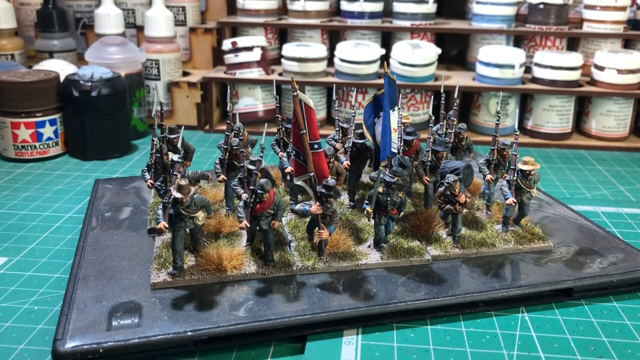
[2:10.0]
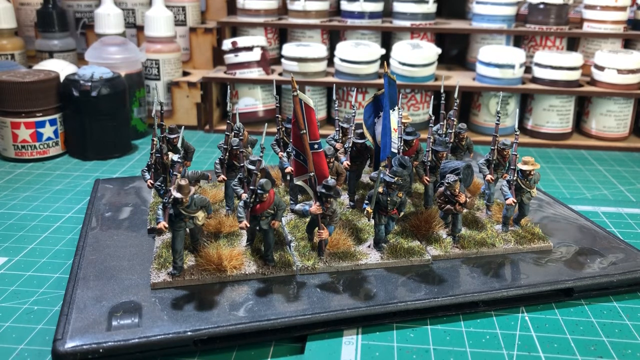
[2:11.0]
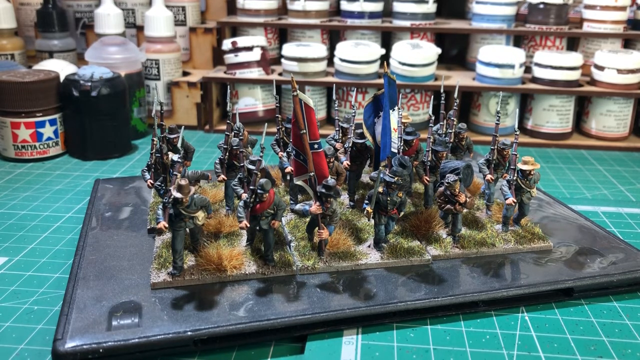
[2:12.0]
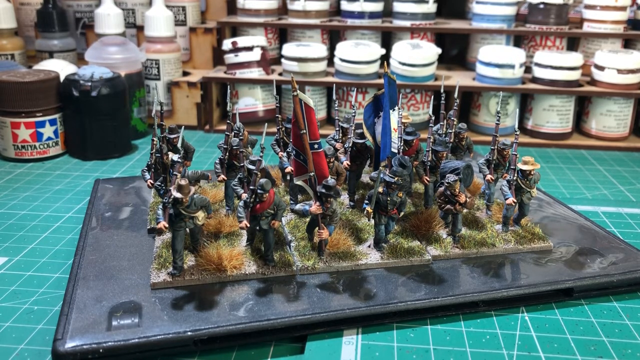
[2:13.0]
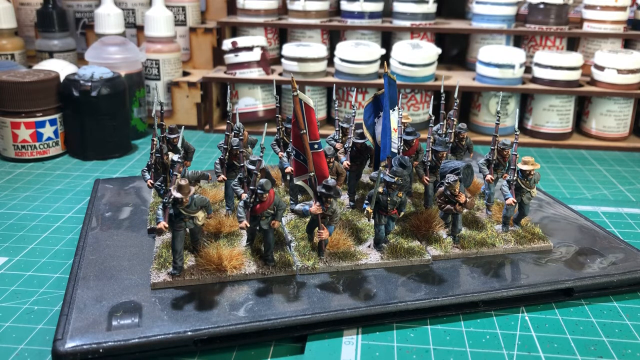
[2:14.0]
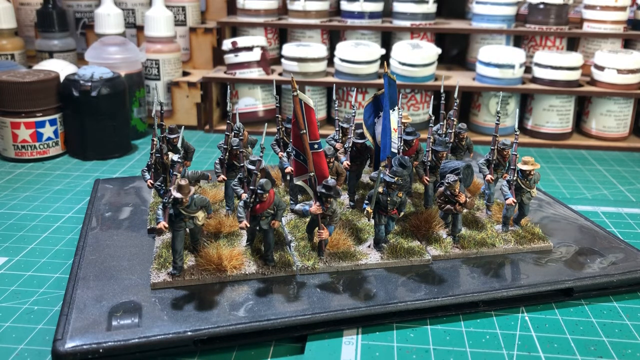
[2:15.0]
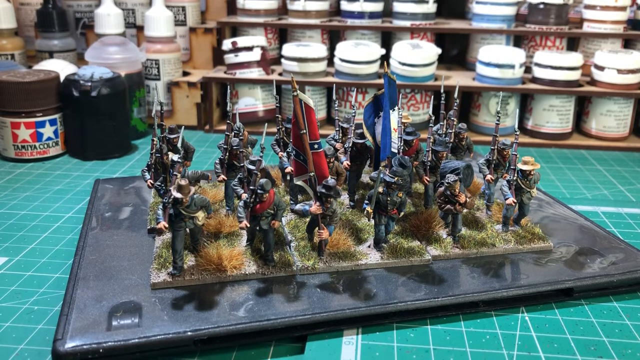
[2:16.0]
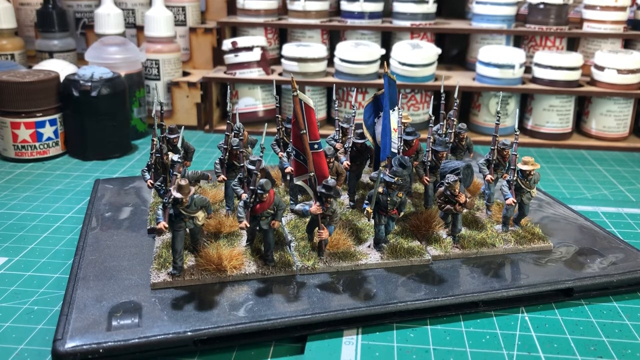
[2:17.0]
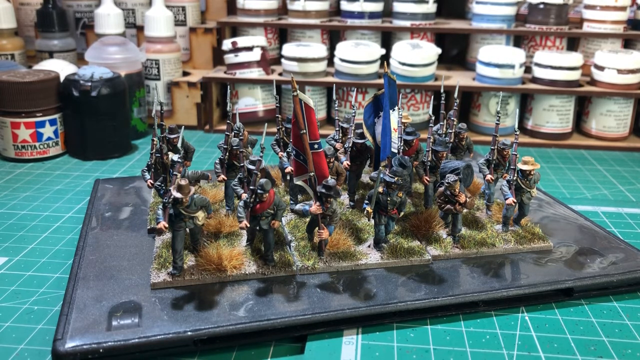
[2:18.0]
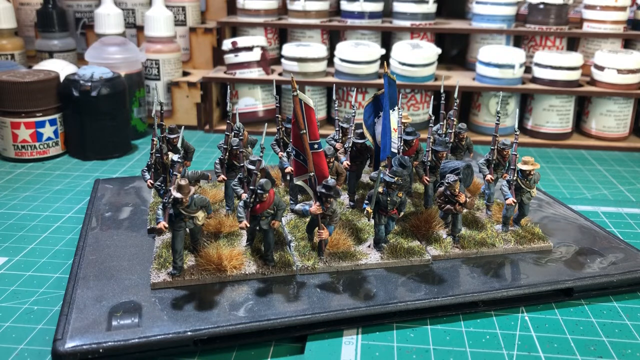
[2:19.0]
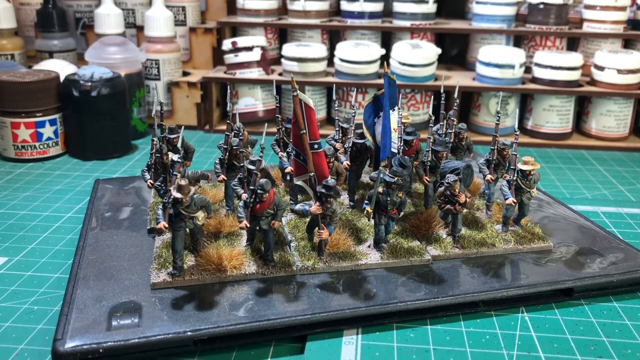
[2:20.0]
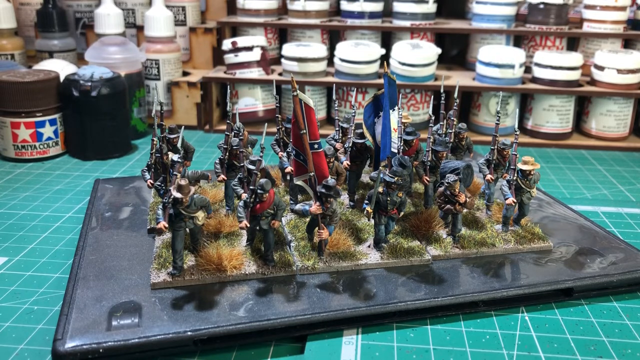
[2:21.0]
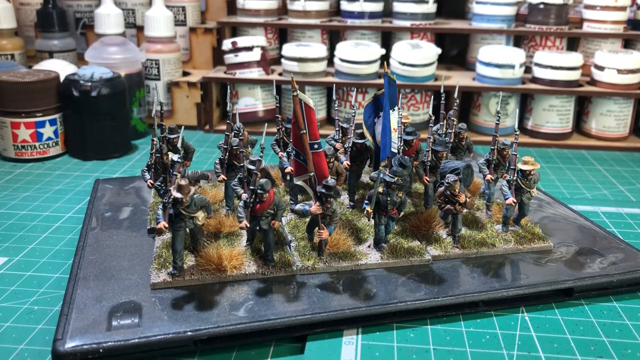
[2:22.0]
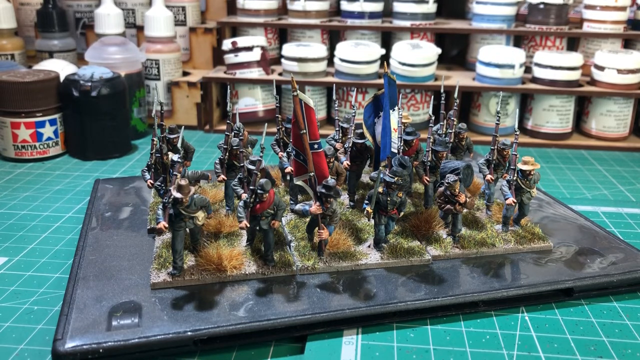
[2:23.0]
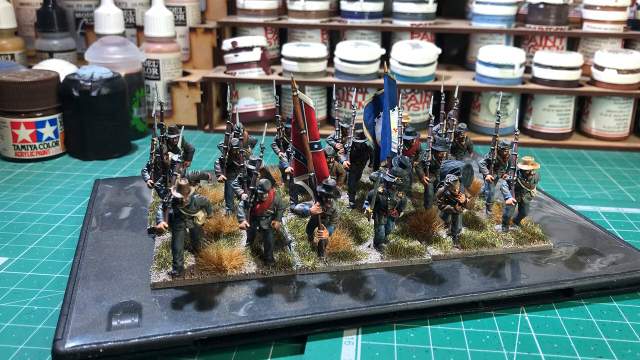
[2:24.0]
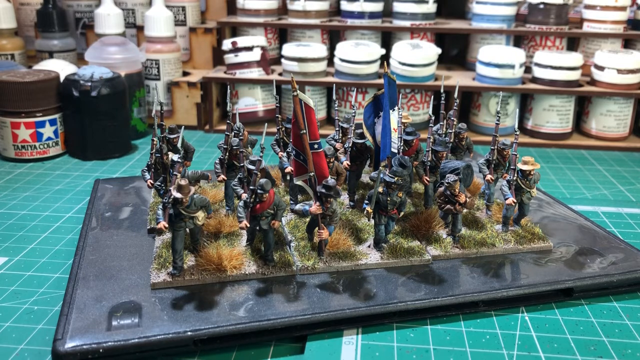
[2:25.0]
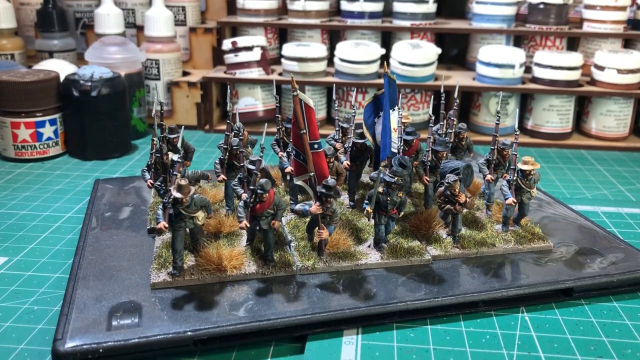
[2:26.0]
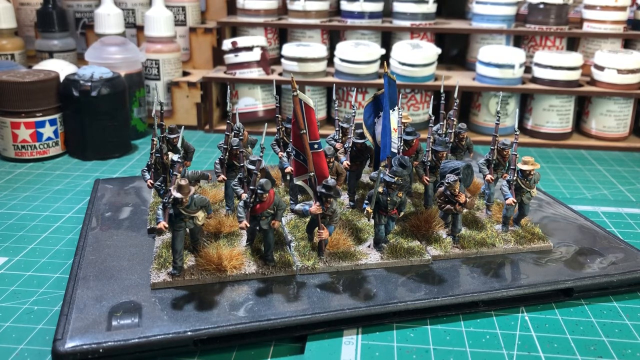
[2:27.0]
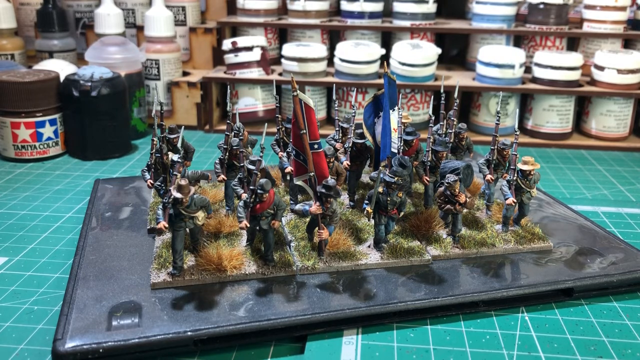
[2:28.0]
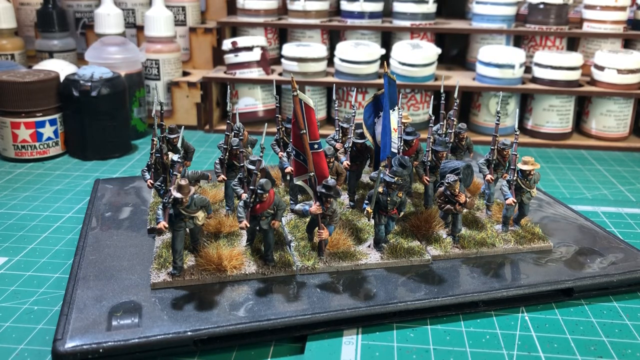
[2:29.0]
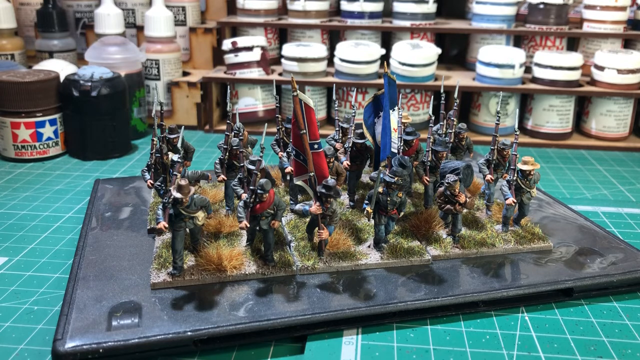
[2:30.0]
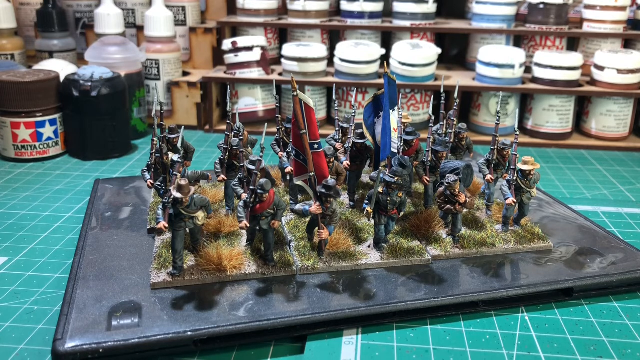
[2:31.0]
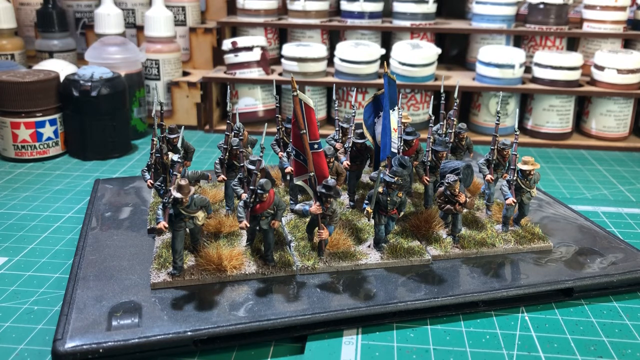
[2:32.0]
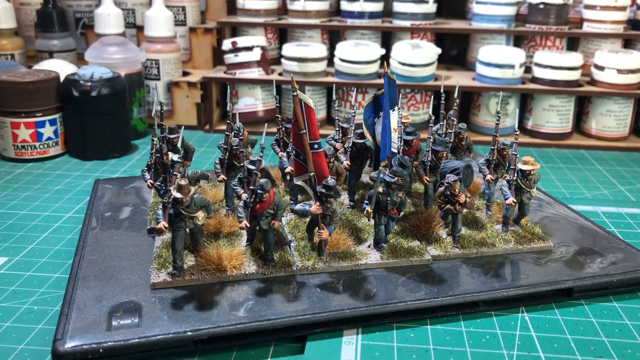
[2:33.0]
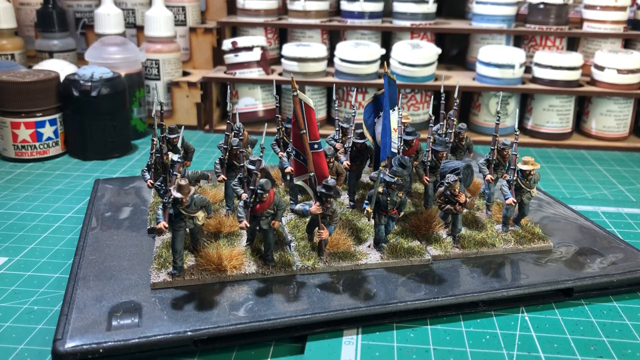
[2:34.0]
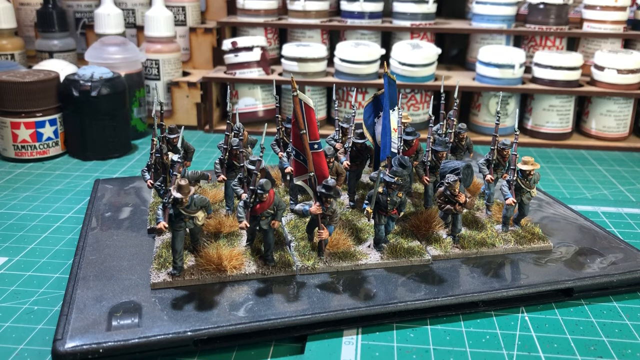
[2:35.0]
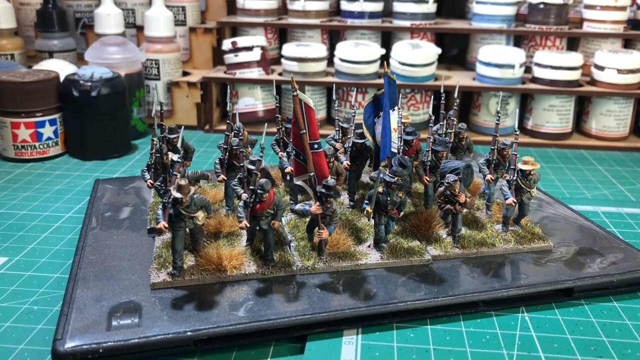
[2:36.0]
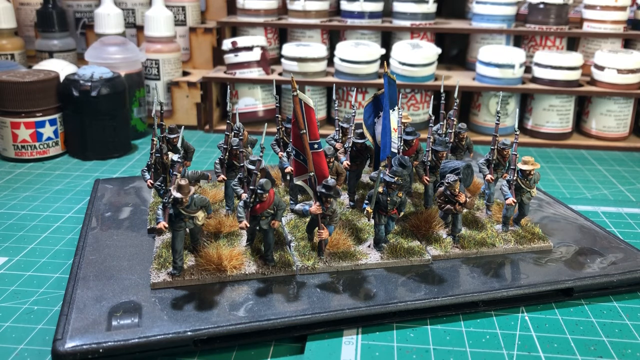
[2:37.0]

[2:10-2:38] The view is a static image, and the human hand is no longer present. There are 15 to 20 figures, all male and war-based, carrying weapons and flags. The figures are very detailed and look like they would be heavy. They are in a workshop that contains paint, with many paint colours in the background.